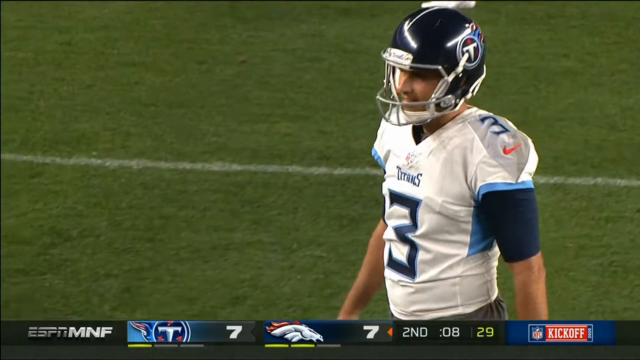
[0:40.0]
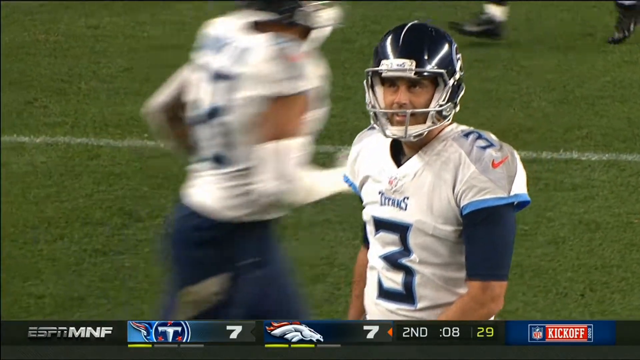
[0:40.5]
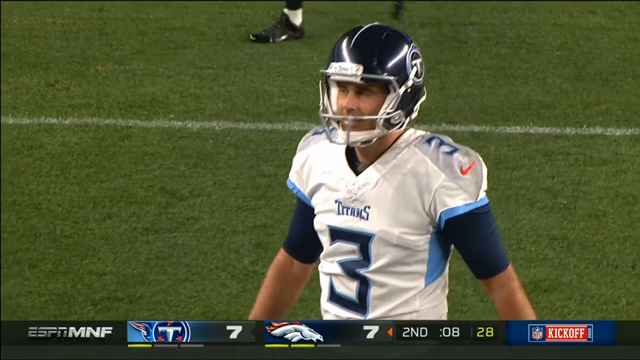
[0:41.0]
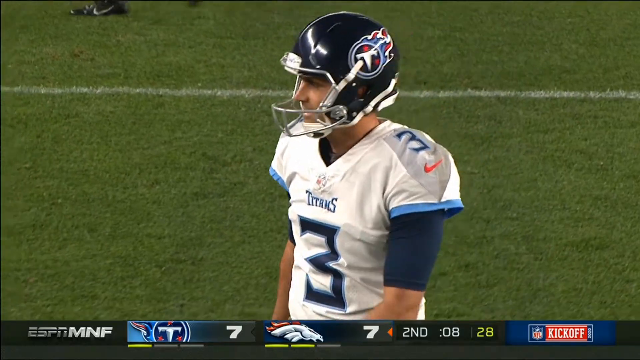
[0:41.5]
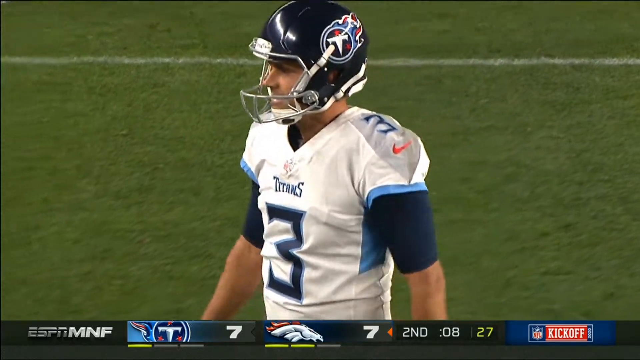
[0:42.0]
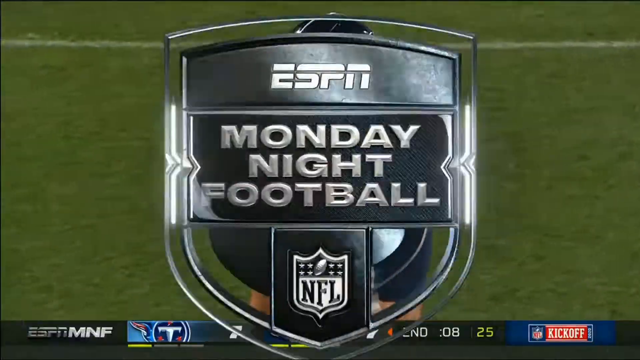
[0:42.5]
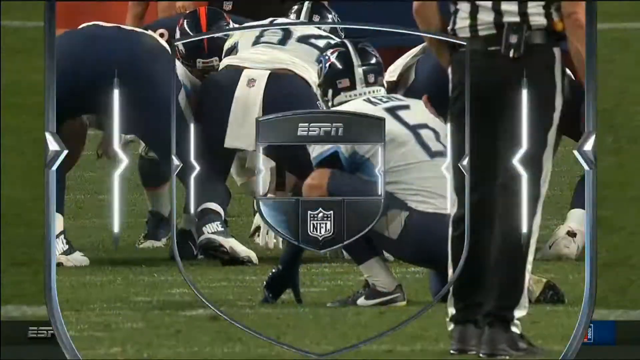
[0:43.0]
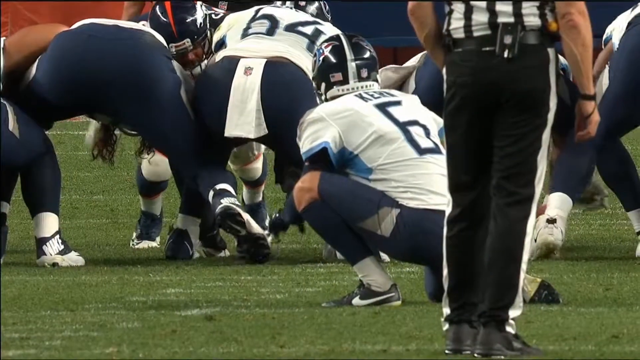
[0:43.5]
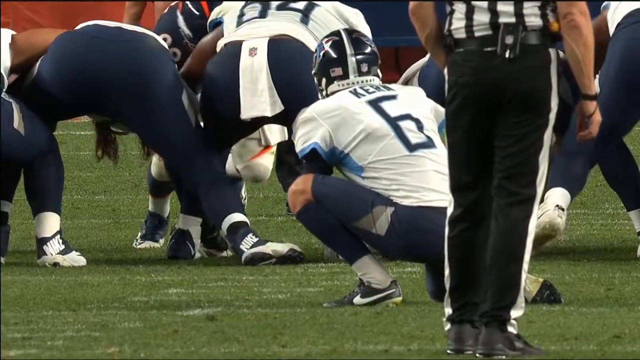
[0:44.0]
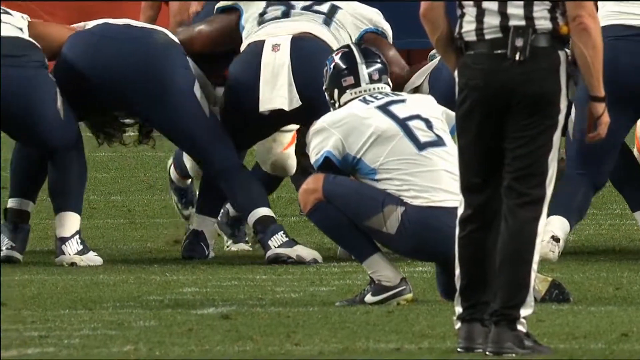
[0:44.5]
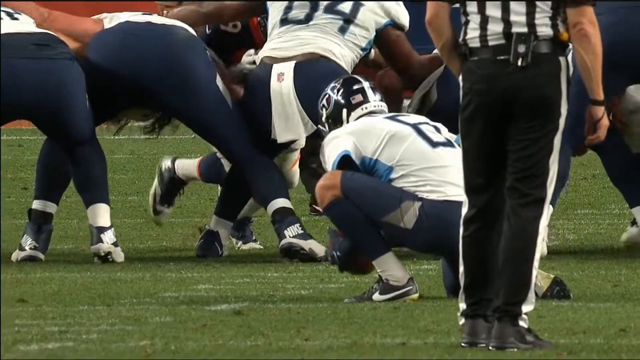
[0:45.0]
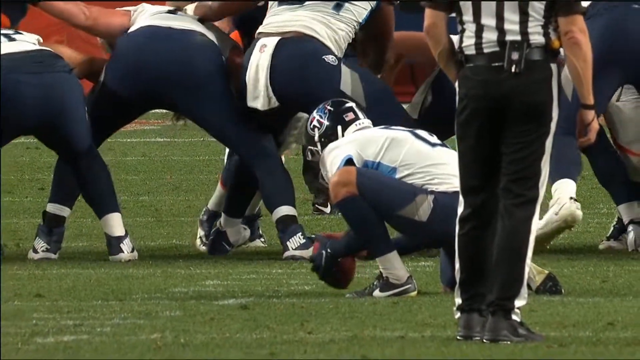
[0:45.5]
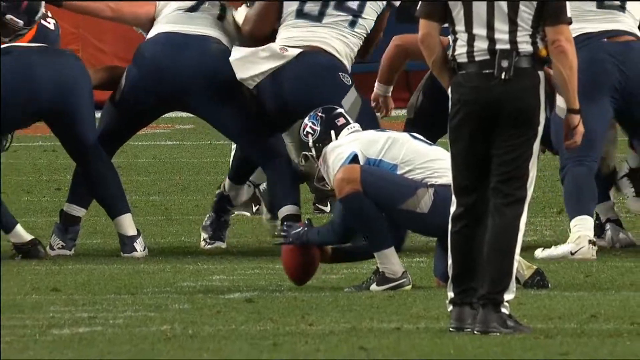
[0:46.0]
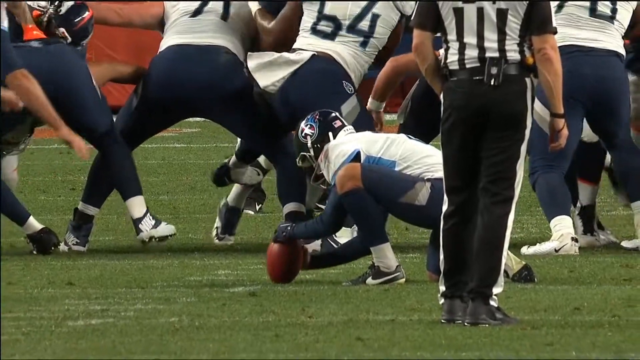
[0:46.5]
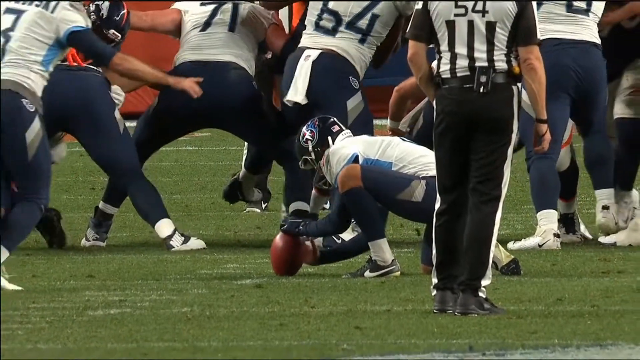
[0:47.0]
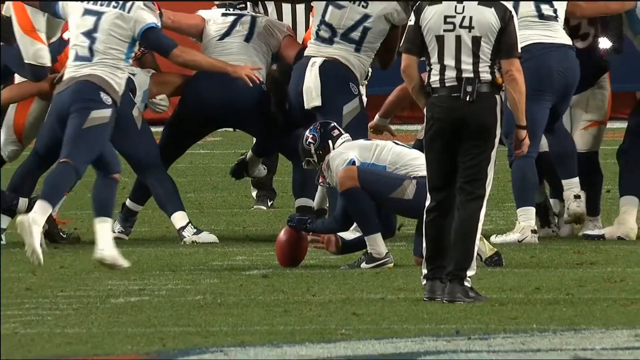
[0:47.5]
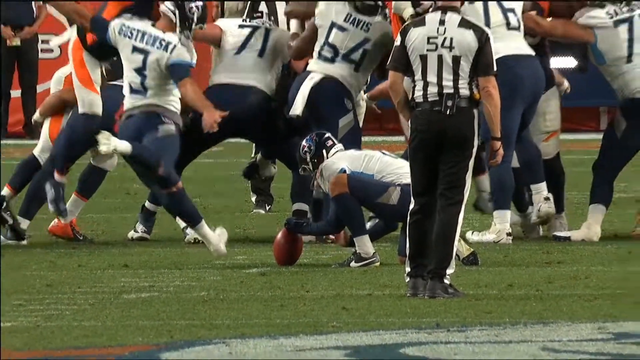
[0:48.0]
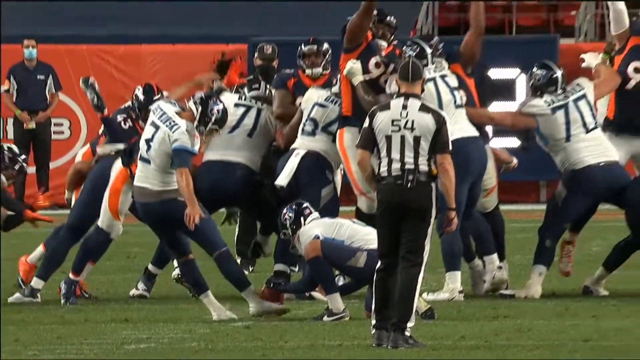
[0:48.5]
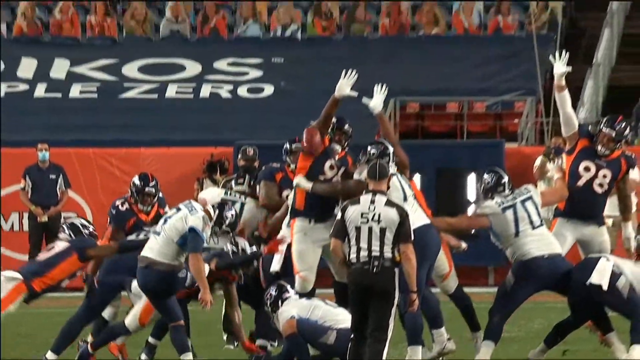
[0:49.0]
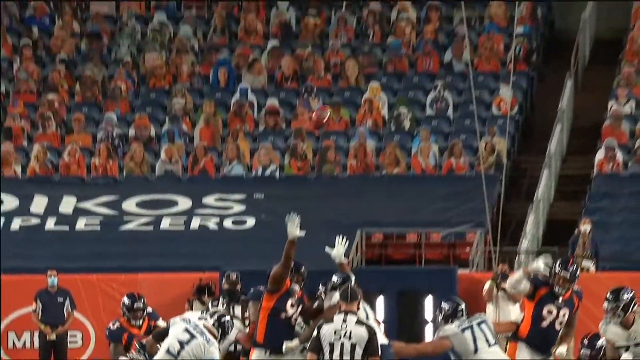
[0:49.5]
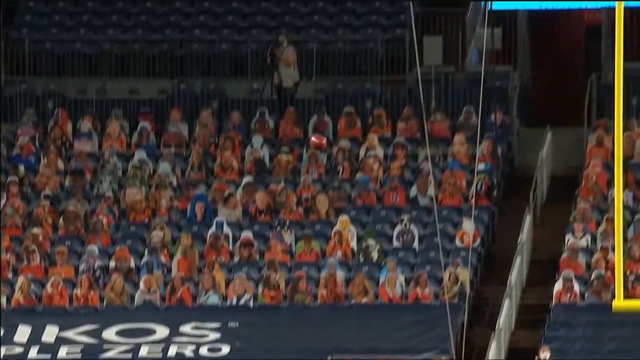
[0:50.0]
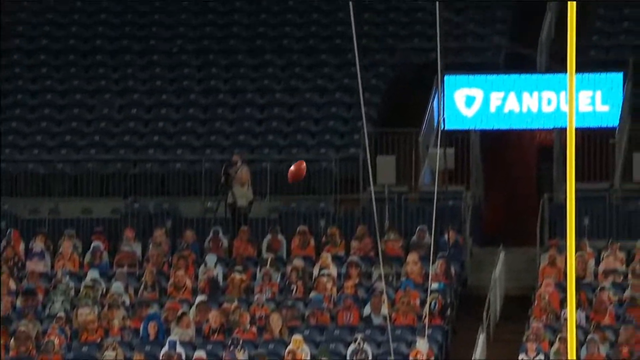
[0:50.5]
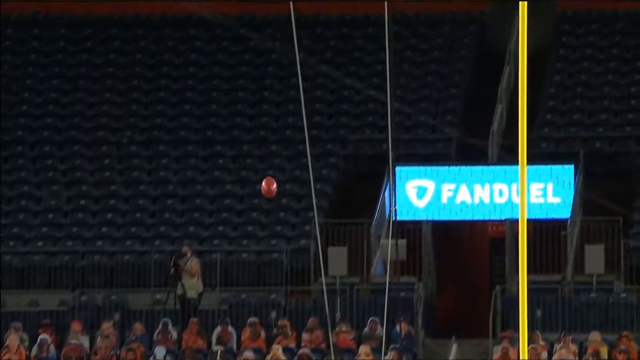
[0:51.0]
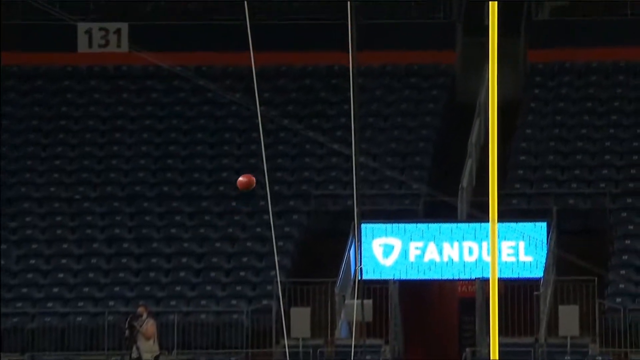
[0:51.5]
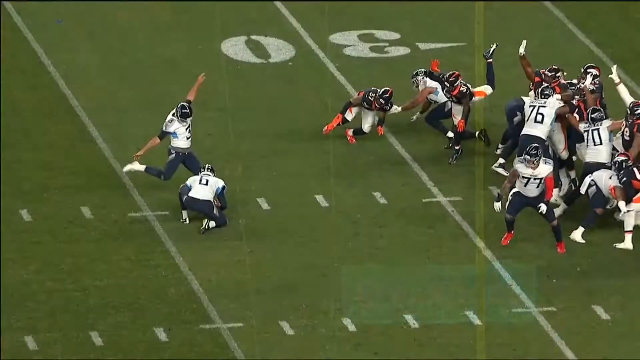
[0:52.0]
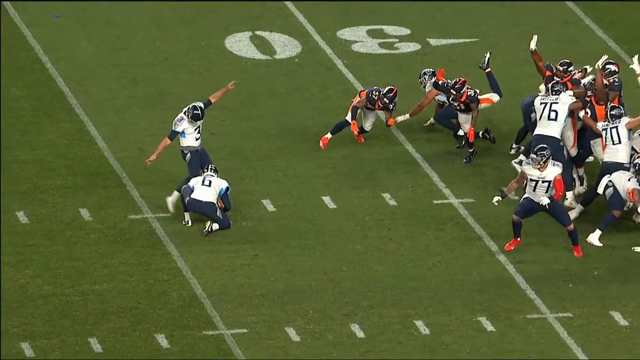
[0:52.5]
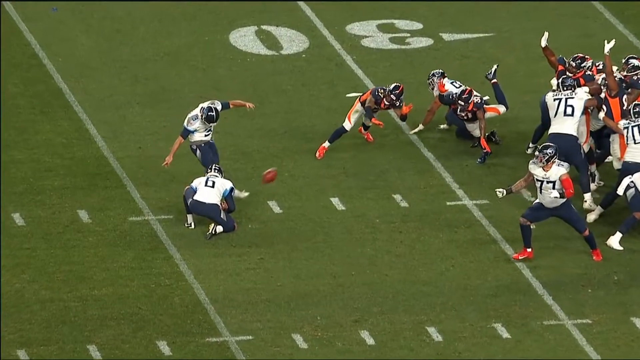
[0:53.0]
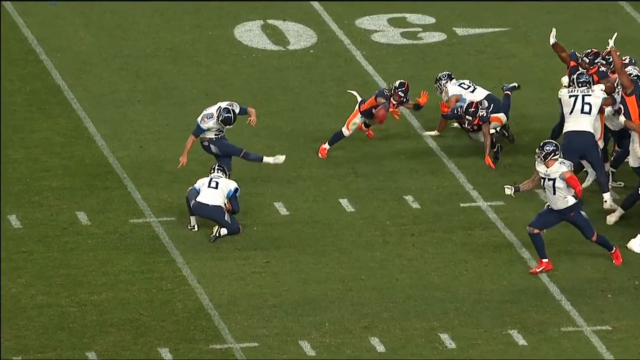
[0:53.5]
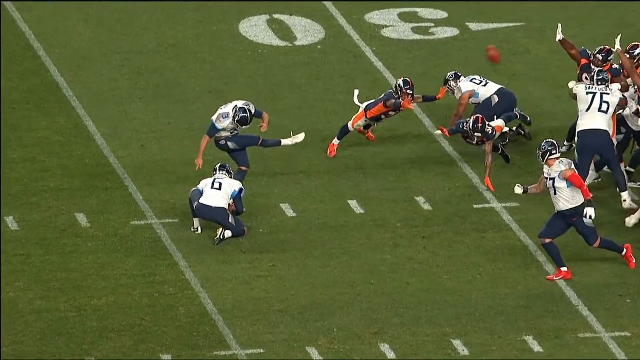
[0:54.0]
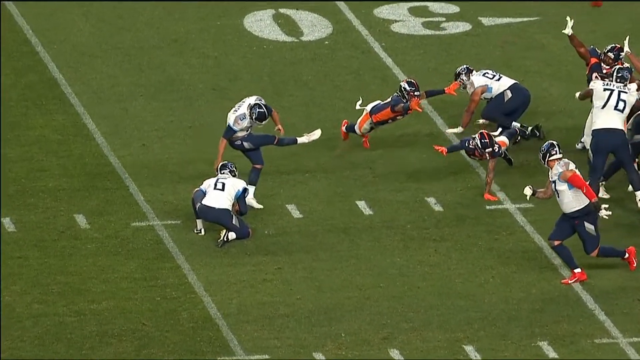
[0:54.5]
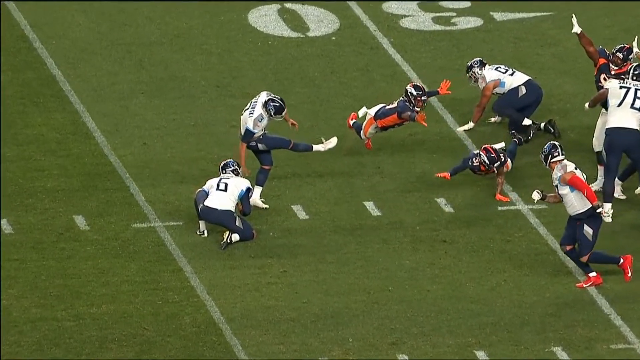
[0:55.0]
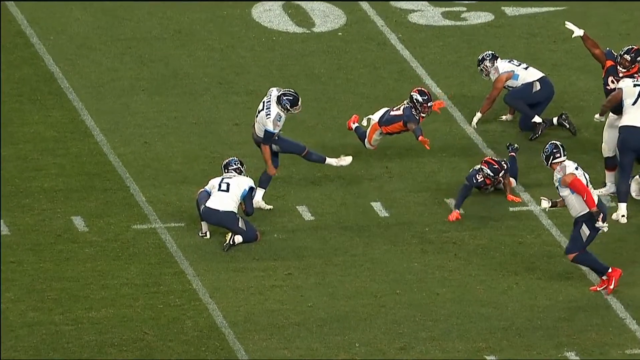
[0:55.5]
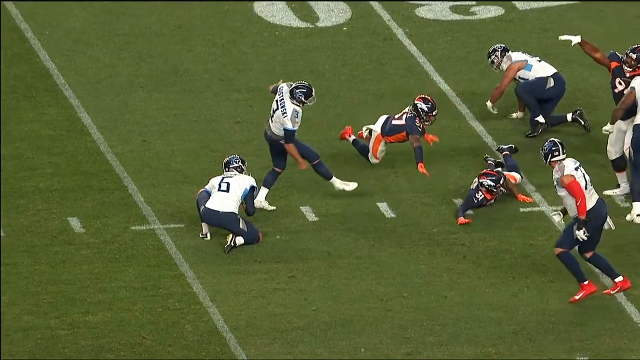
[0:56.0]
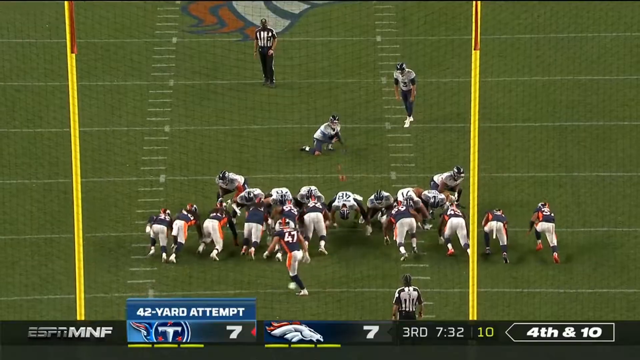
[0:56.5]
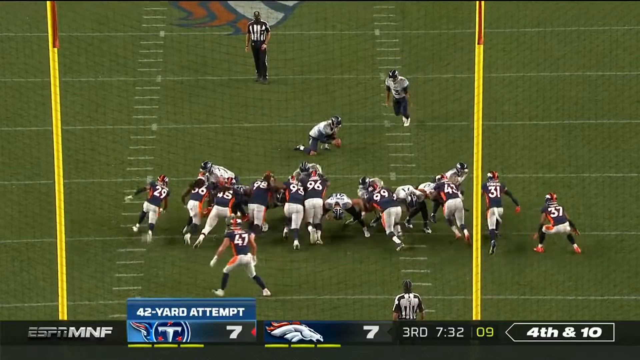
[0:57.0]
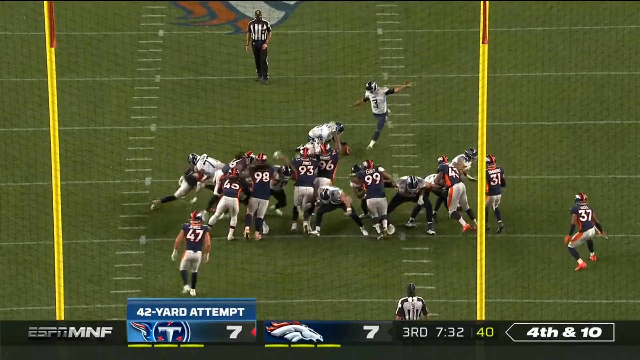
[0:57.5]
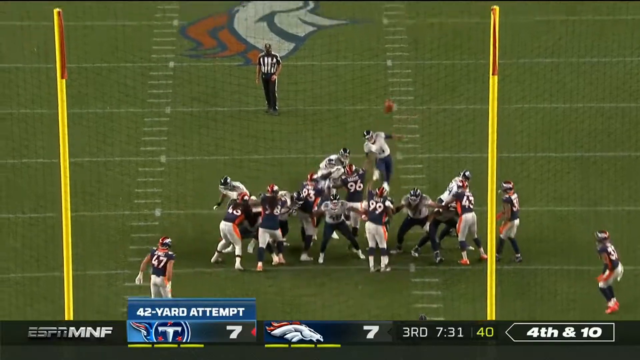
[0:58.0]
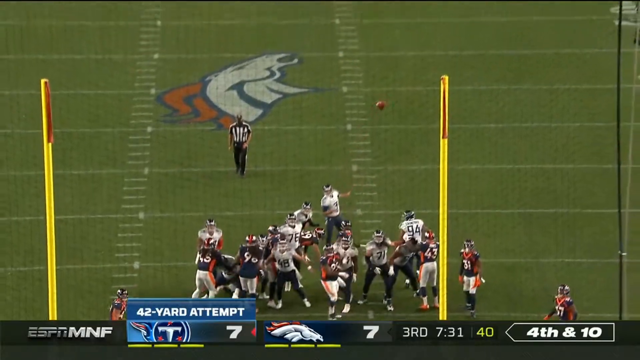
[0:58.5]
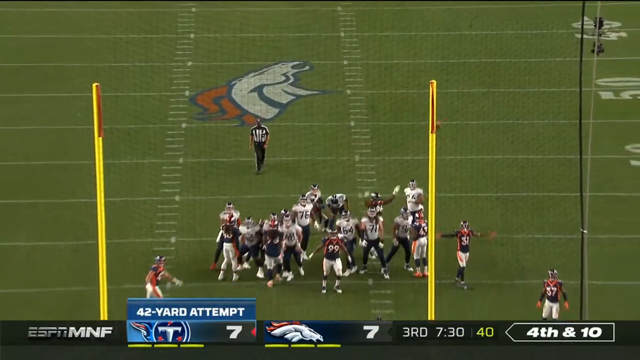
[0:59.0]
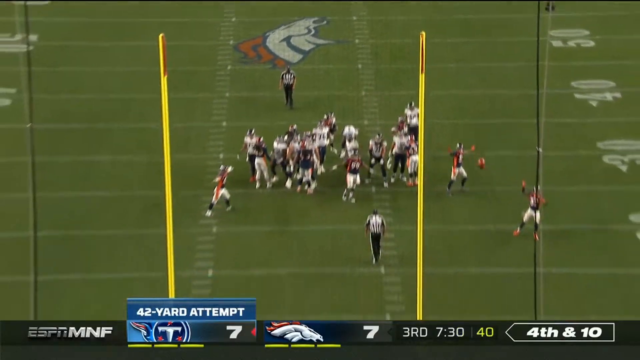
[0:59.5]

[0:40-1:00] The game moves to the second quarter with the score tied, Tennessee Titans 7 and Denver Broncos 7. The Titans attempt a 44-yard field goal with 12 seconds remaining in the second quarter and 40 seconds on the game clock; it is fourth and 12. As the punter lines up to hit the ball, the Broncos defense tries to stop the kick. The field goal attempt misses, and three seconds come off the clock, leaving nine seconds in the quarter. Some of the Titans players walk up to the punter, while the Denver Broncos appear to be celebrating as their defense has halted the scoring attempt.